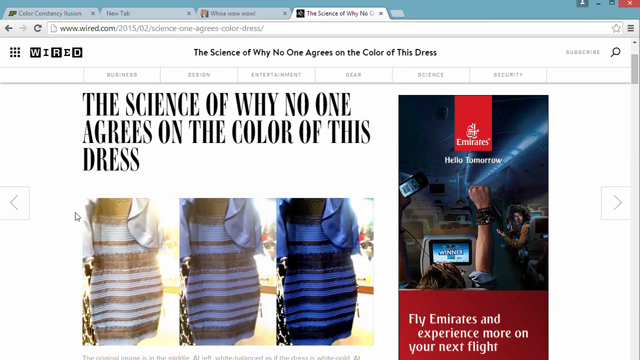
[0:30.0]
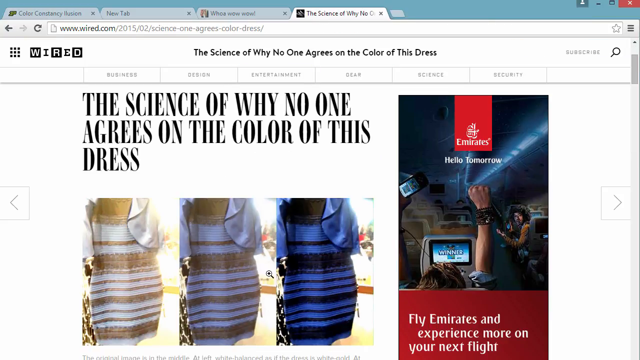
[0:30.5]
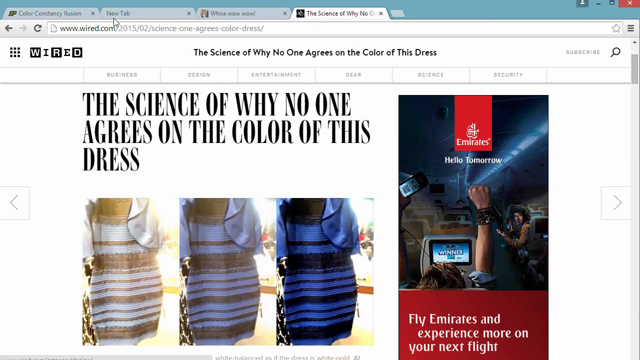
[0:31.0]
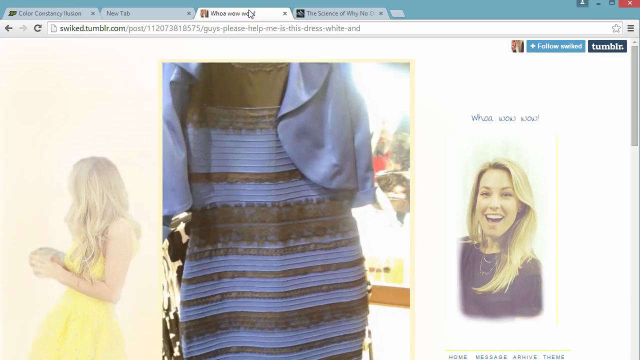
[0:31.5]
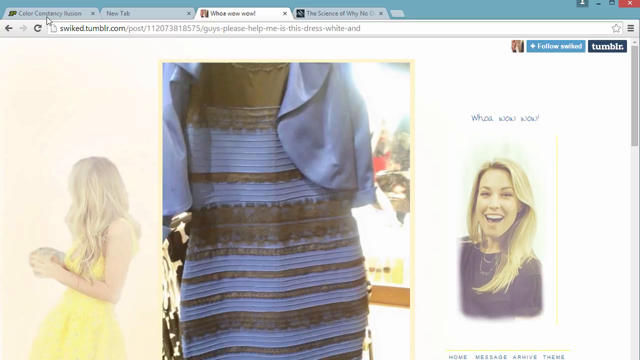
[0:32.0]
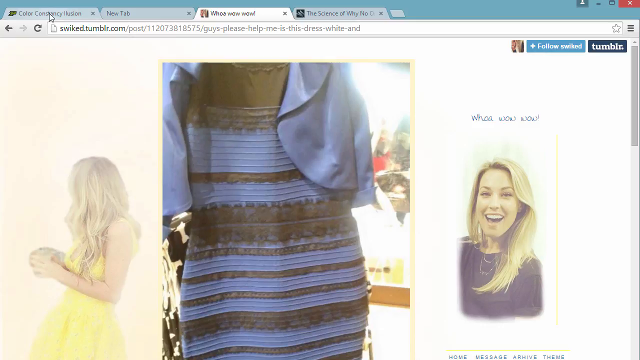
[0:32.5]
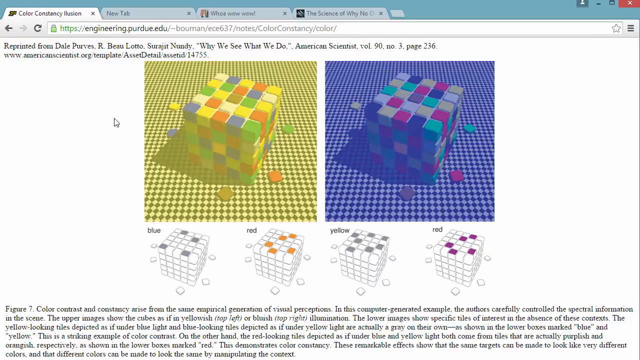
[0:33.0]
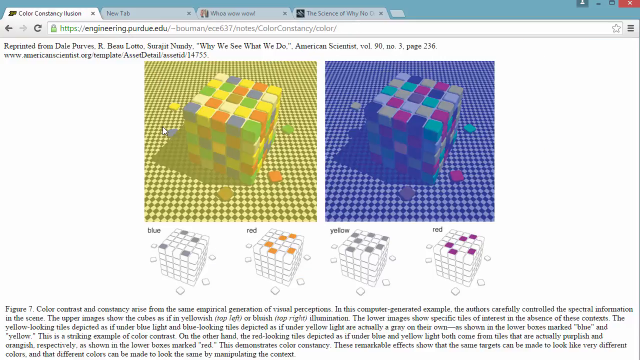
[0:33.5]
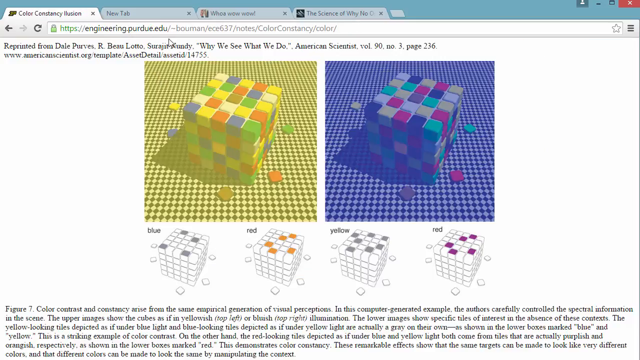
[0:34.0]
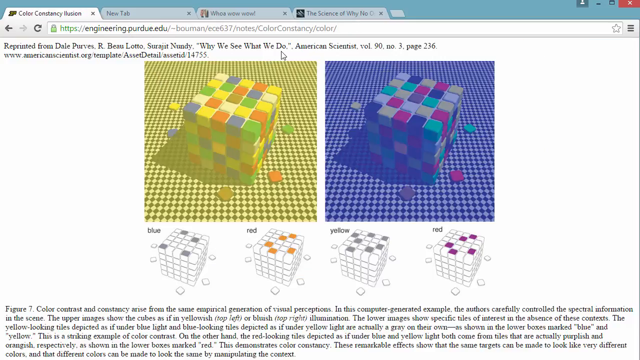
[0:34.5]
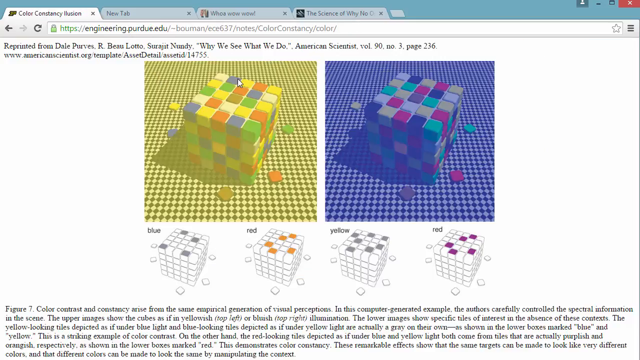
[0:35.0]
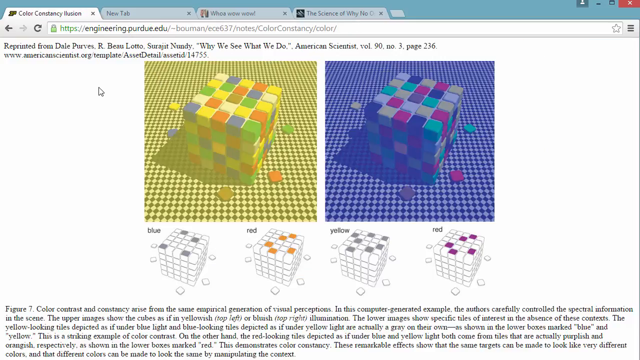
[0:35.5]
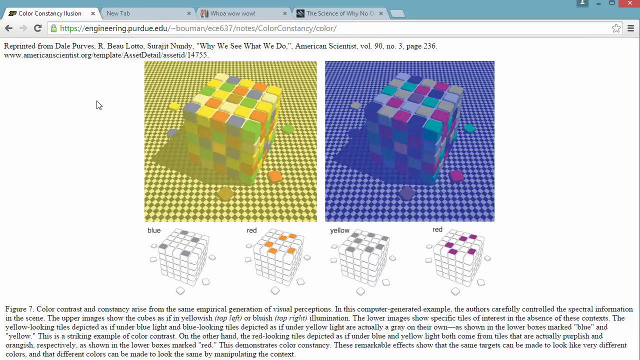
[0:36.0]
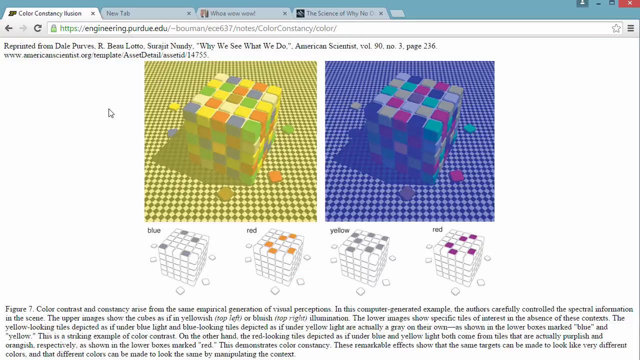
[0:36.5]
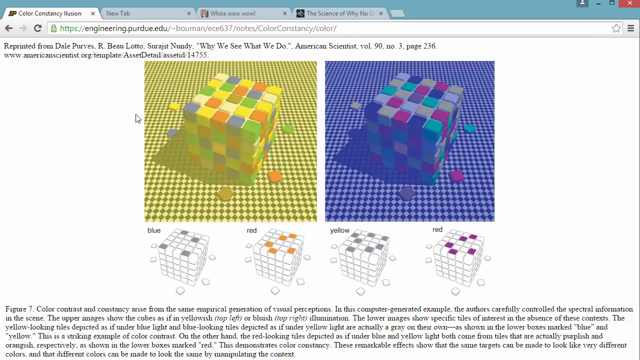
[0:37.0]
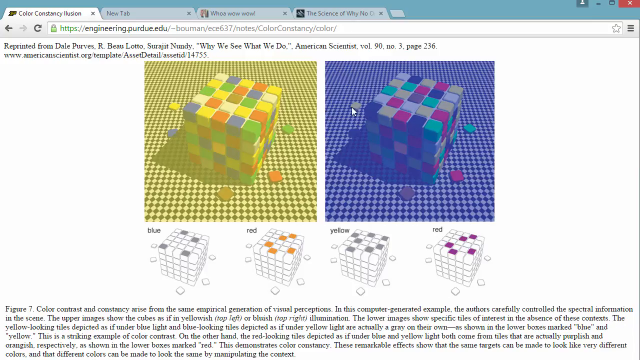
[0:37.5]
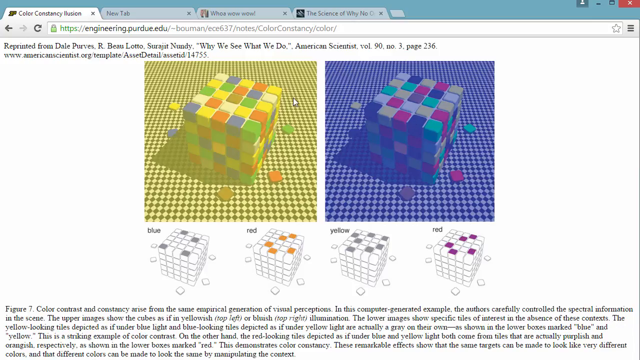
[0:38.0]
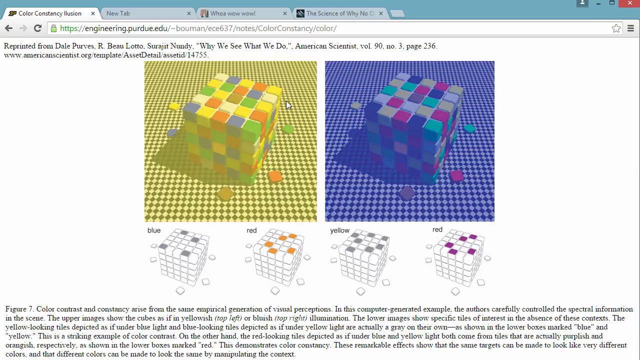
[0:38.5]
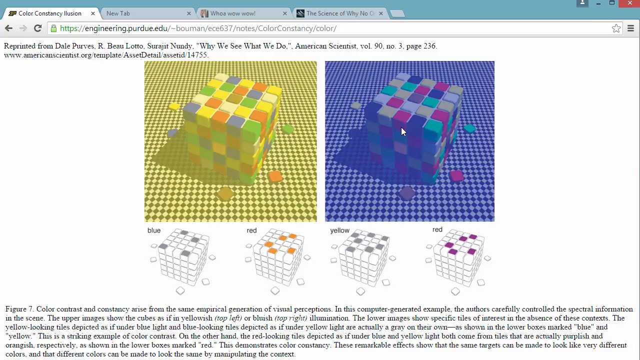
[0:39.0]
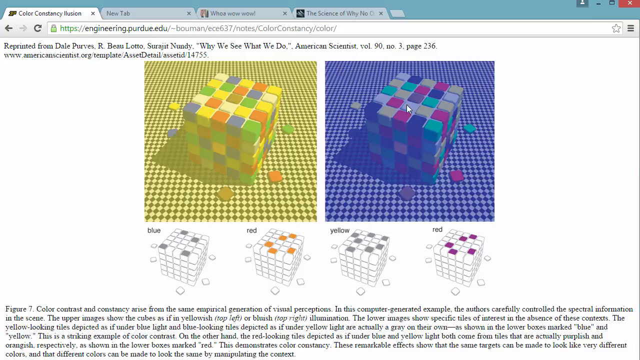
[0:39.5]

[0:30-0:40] The fourth tab shows the Wired website with "the science of why no one agrees on the color of this dress". The third tab is titled "Whoa Wow Wow", the second appears empty and says "new tab", and the first is the color constancy illusion. The page has an advertisement for Emirates, an airline. It also shows the dress in images: one lightened and very distorted, one somewhat better, and one very dark blue and black, at least to the viewer's eye. The browser then switches to the first tab, the color constancy illusion. The mouse hovers over the right side, where a Rubik's Cube-like figure with many colors is covered in a blue overlay; on the left side the same figure is covered in a yellow overlay.